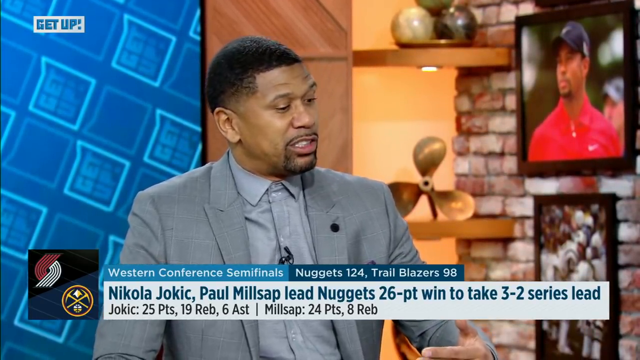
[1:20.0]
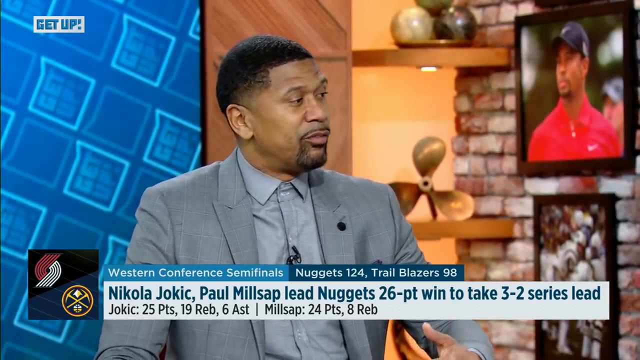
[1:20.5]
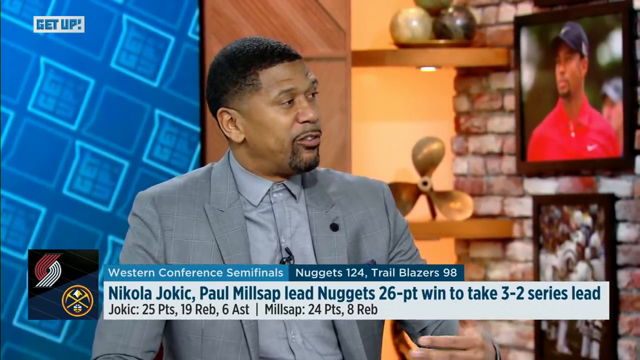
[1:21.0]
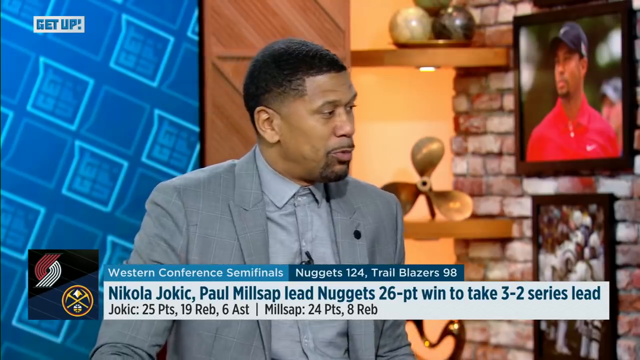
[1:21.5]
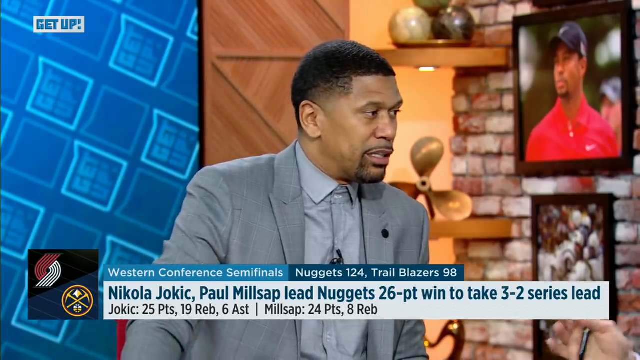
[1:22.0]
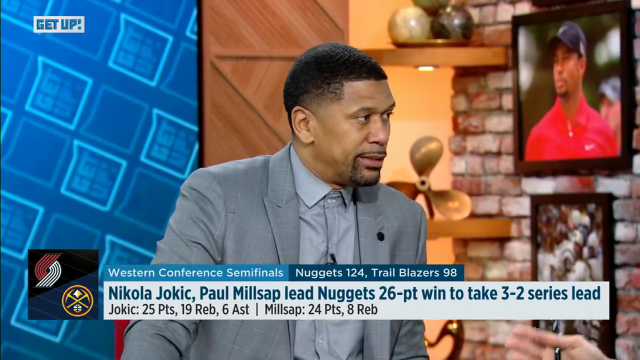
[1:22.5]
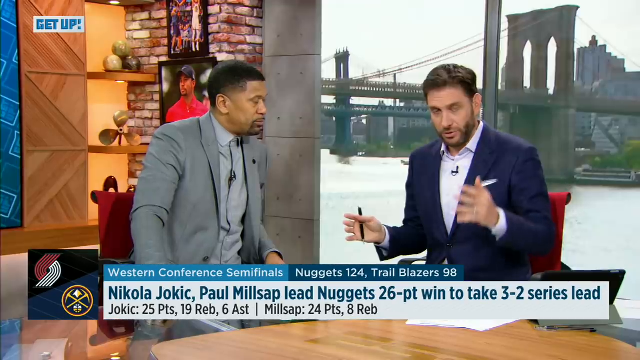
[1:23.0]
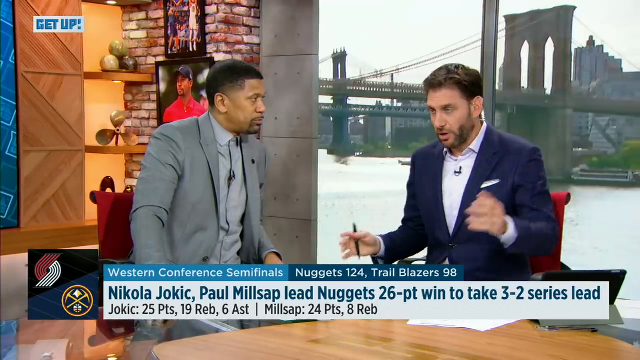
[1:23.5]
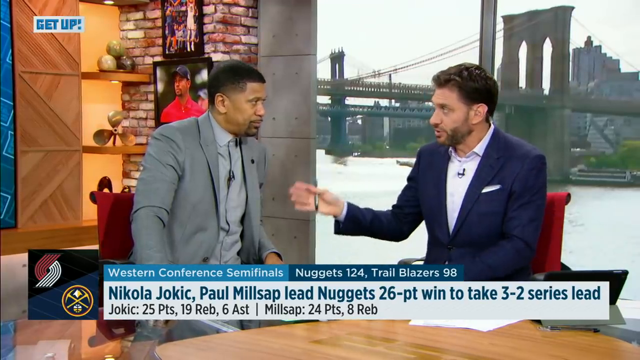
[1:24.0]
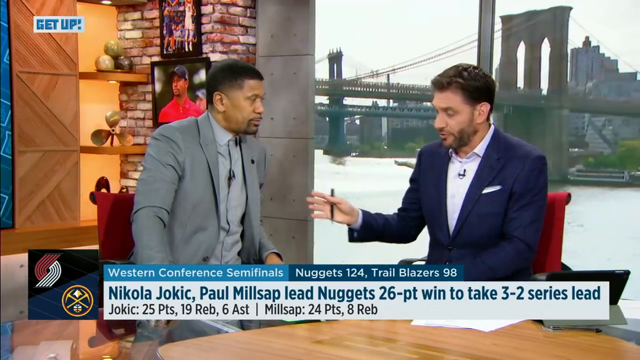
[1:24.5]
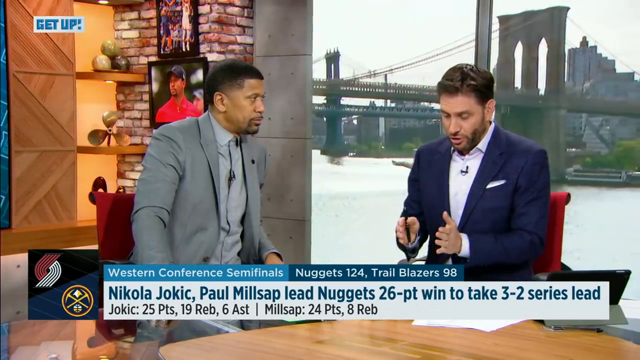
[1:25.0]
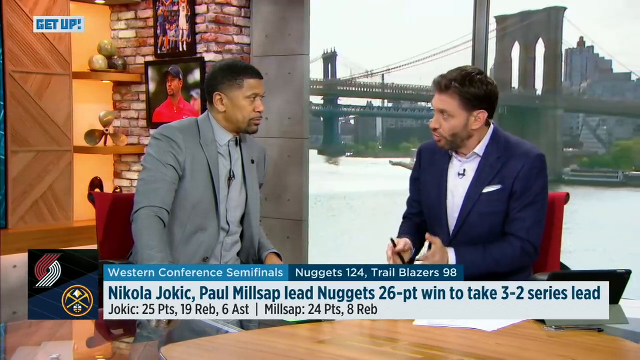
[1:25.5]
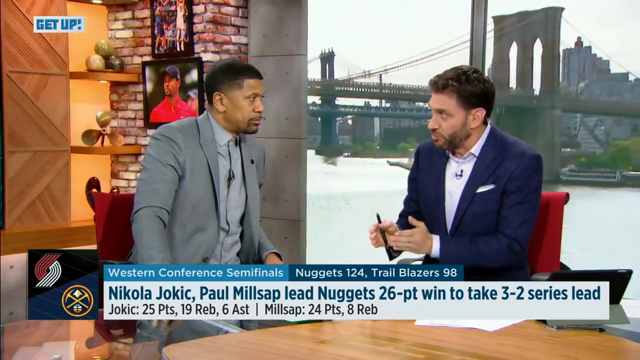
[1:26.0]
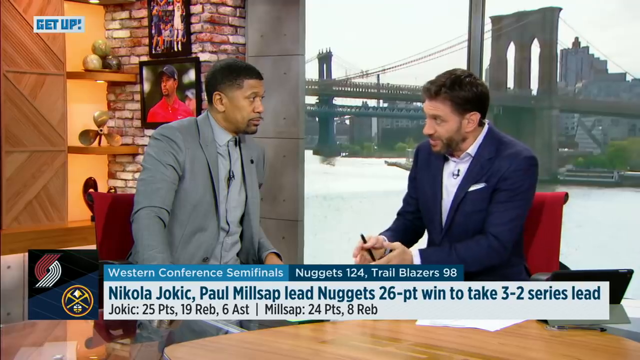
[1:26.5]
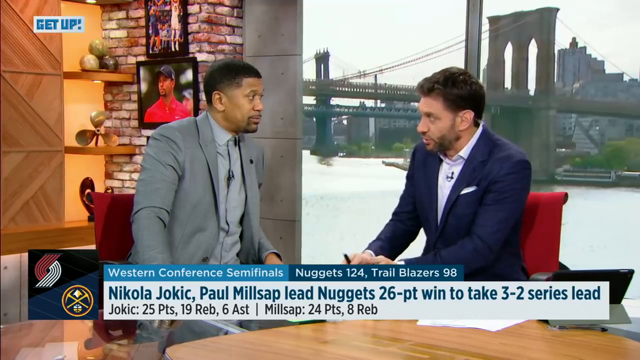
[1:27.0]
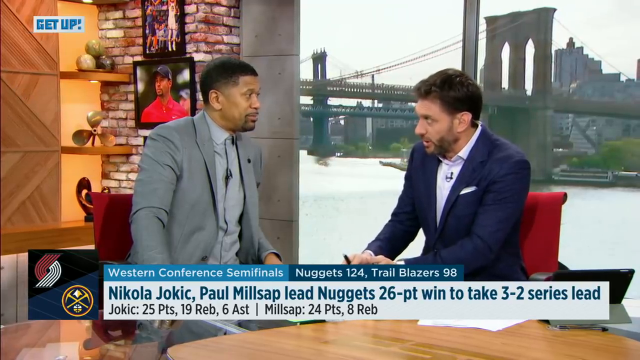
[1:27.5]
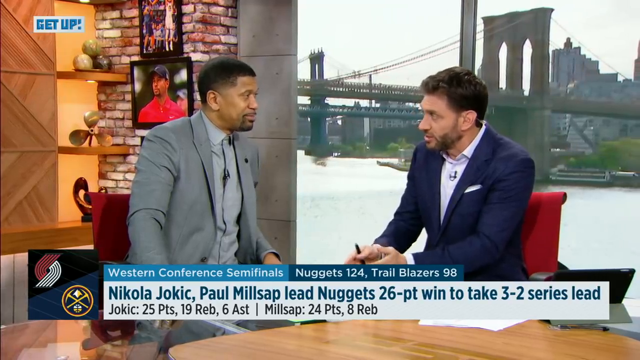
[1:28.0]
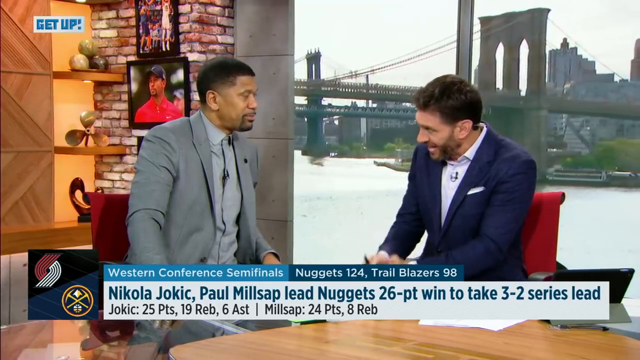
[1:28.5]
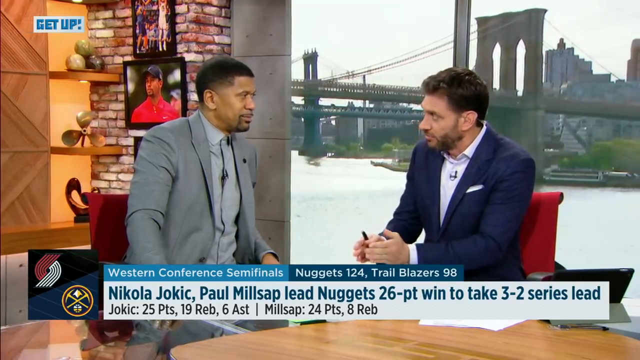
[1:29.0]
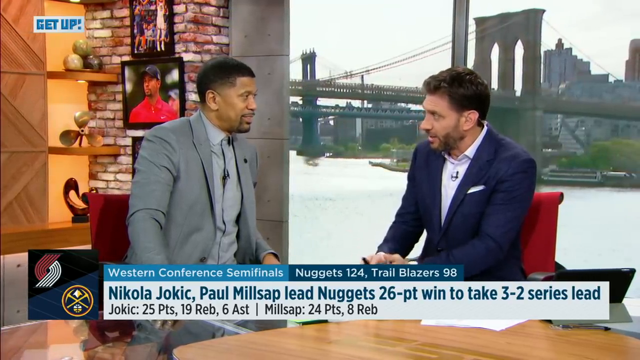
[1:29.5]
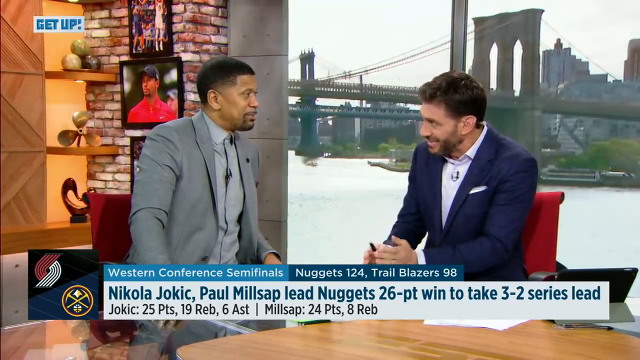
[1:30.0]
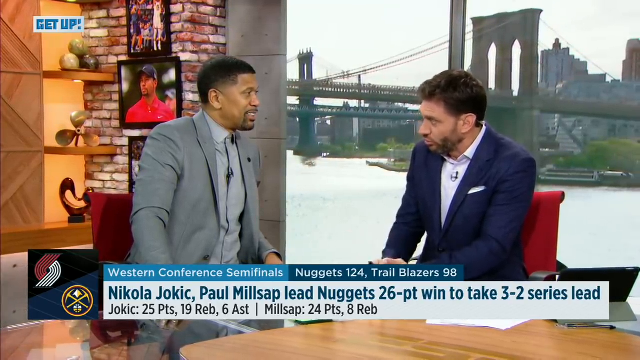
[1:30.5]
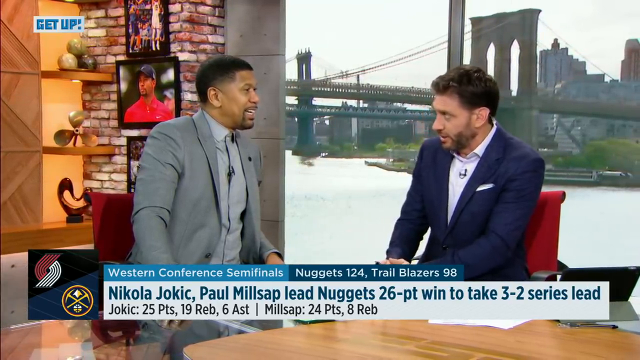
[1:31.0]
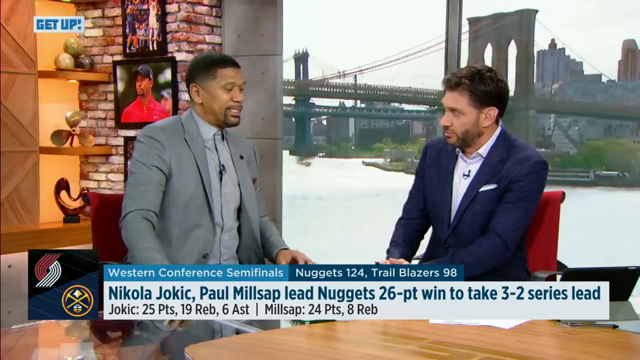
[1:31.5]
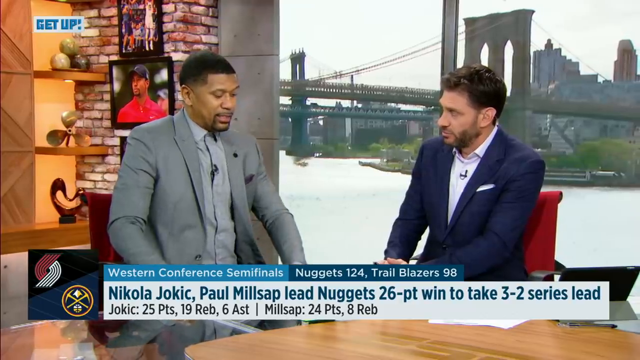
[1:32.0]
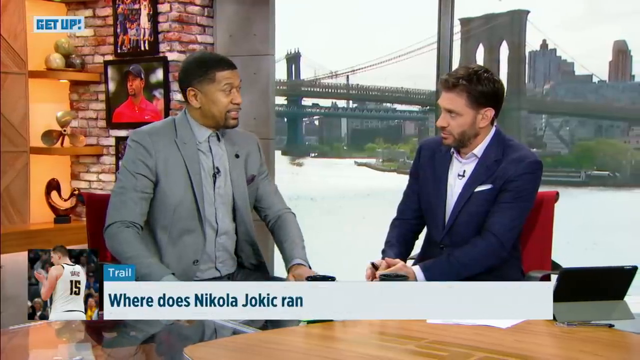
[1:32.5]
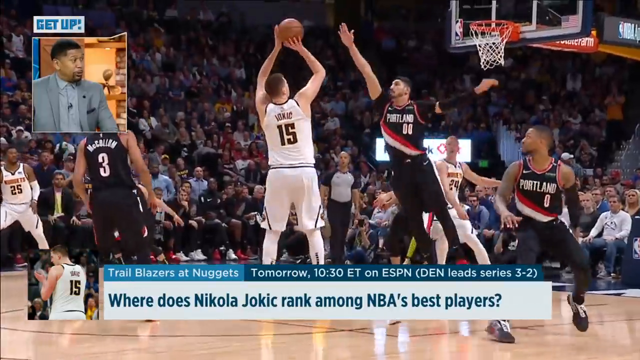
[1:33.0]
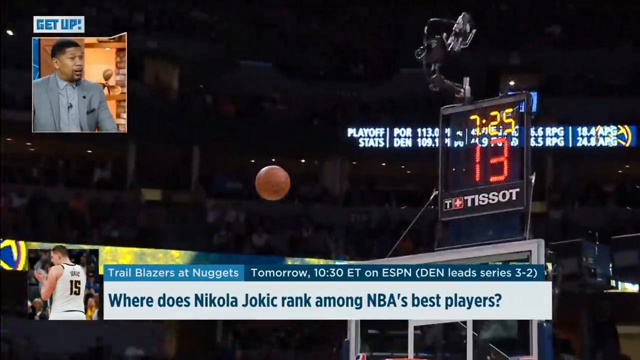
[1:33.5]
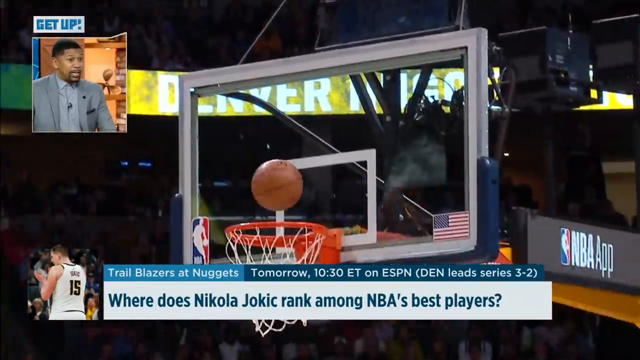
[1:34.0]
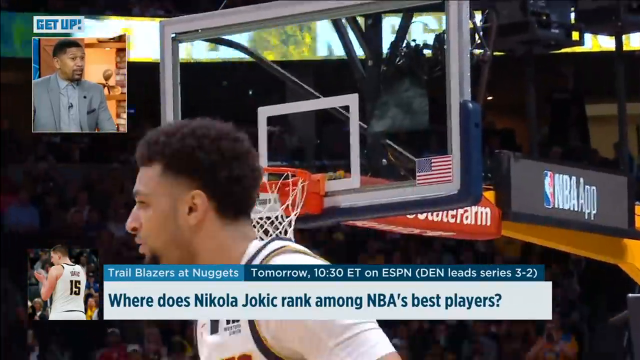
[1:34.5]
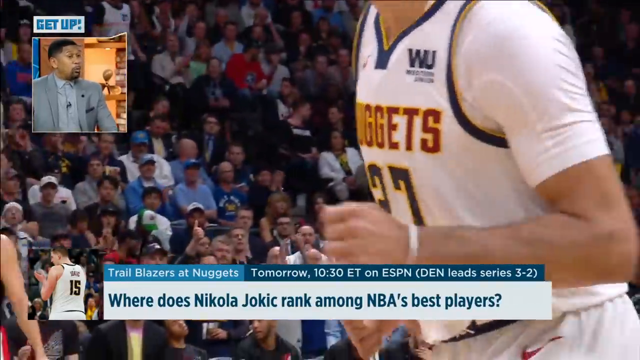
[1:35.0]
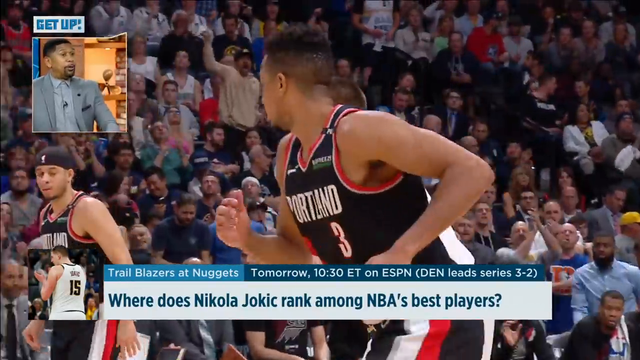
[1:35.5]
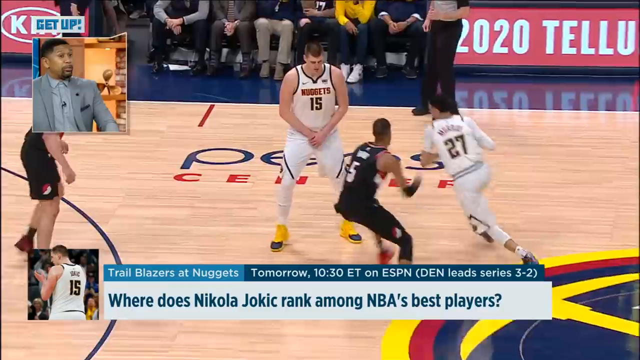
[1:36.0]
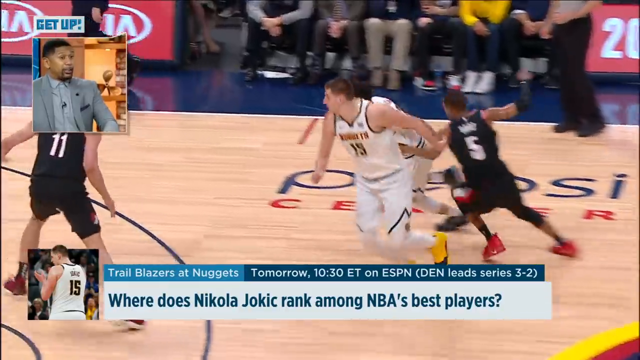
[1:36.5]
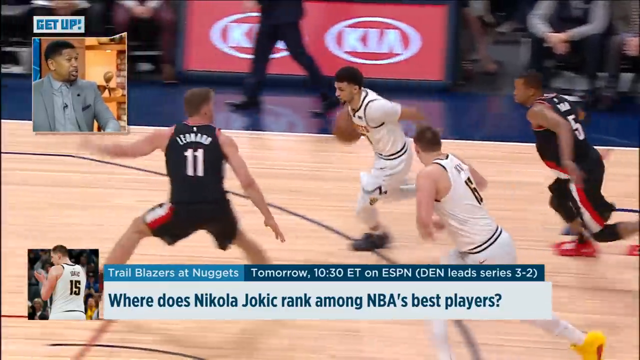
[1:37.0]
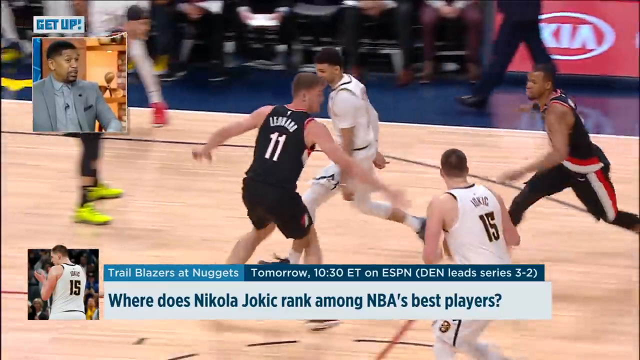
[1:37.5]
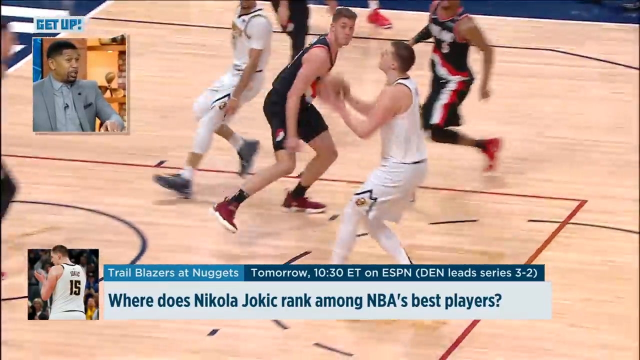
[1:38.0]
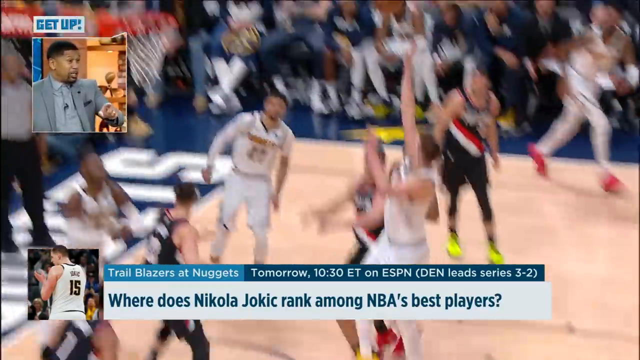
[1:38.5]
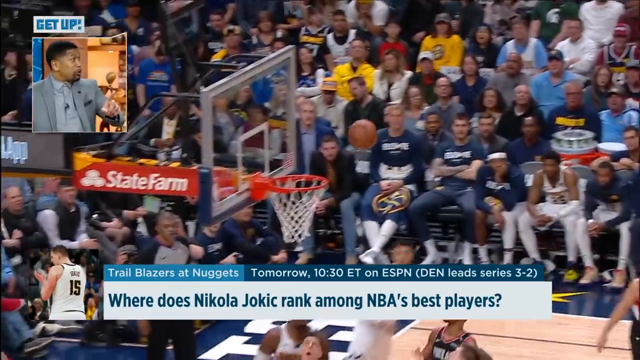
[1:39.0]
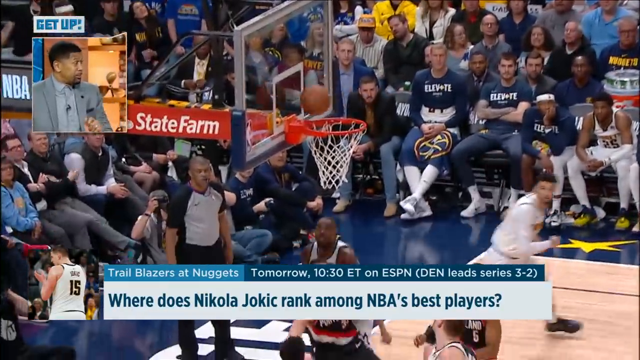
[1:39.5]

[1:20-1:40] The black man with the goatee is shown looking to his left, presumably at his colleague, who is not on screen. Tiger Woods is still in the top right. The shot then changes to capture both men, and the white man with the beard on the right is speaking. He holds a black pen between his thumb and the base of his finger, not really in a writing position, with his fingers pointed outward. He first holds his left hand up in the air and out to the side, then his right hand up and out to the side, at about the level of the top of his chest, then brings them down toward the desk and kind of bounces and pats them on the desk as if to stress a point. He nods, gesturing with his head forward. The video then goes to action clips.